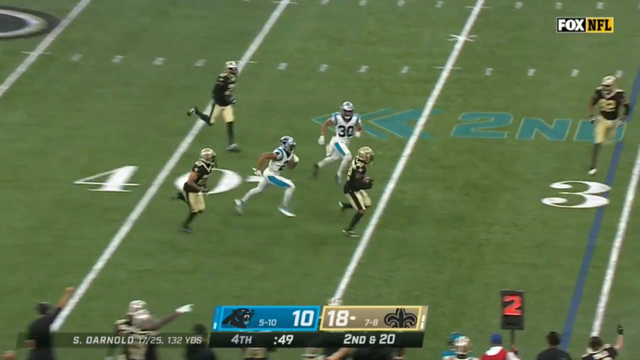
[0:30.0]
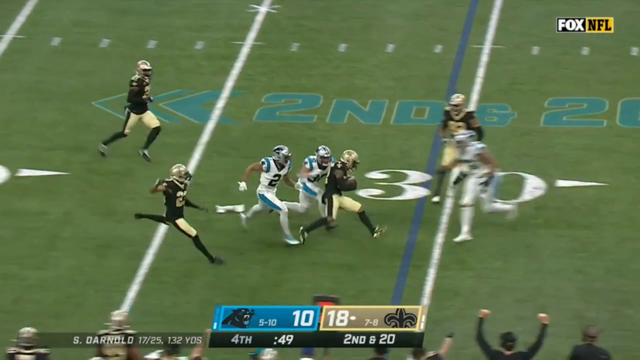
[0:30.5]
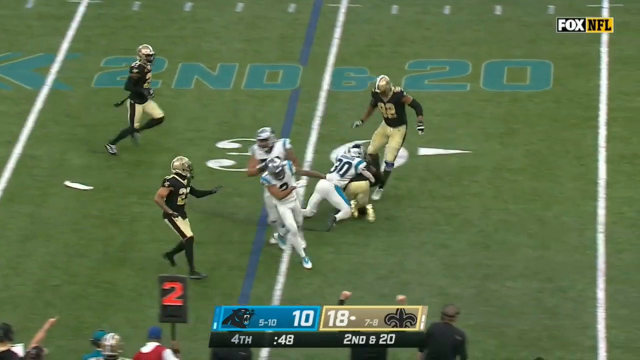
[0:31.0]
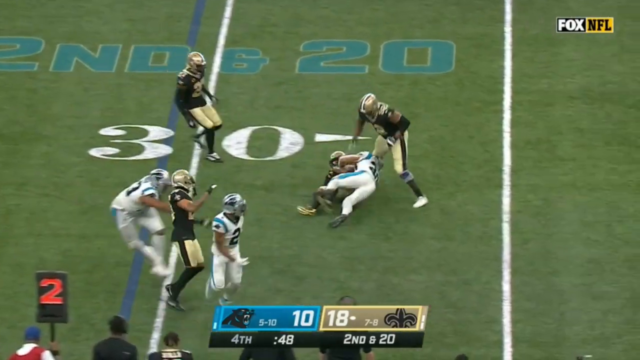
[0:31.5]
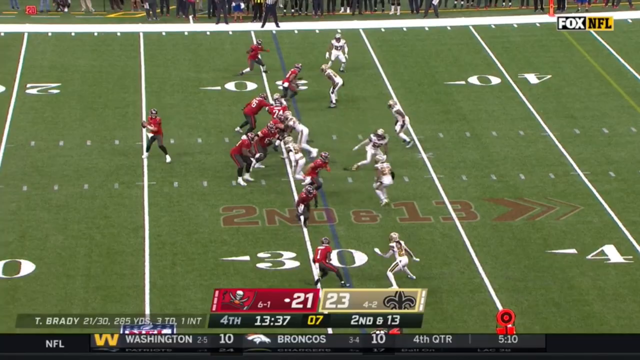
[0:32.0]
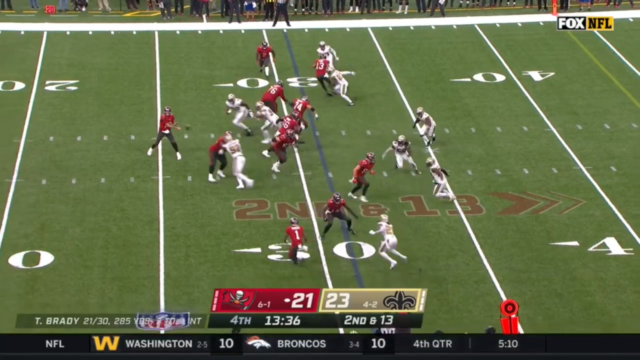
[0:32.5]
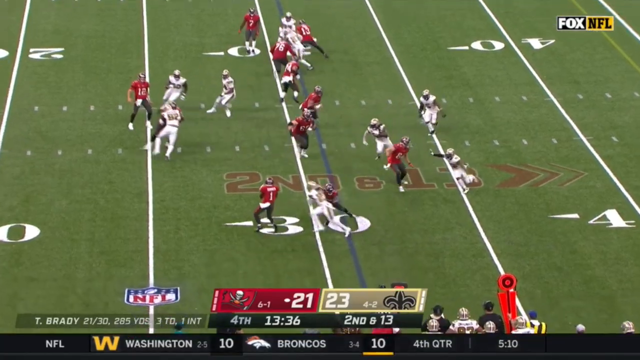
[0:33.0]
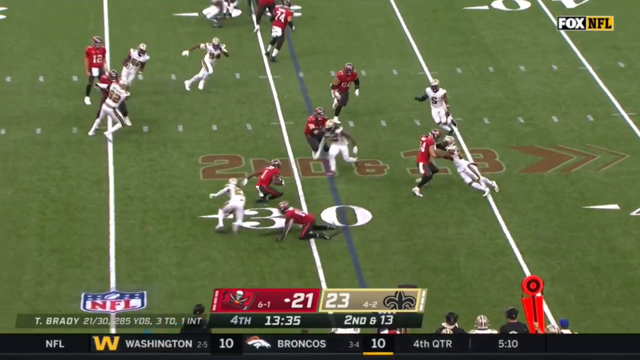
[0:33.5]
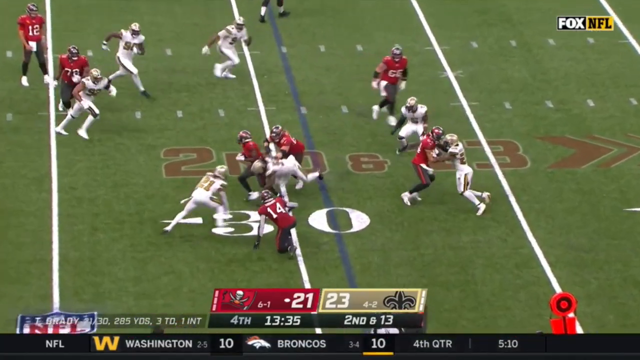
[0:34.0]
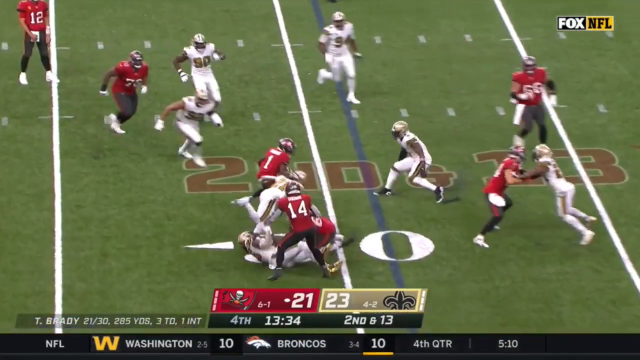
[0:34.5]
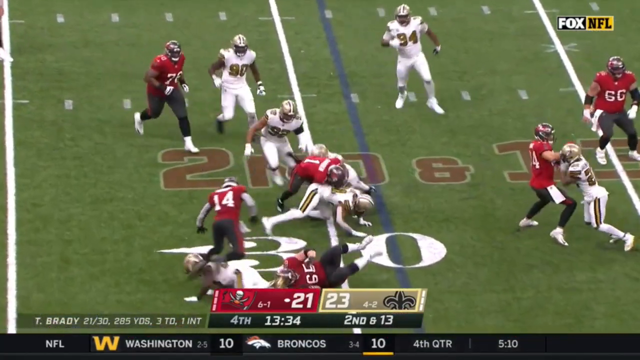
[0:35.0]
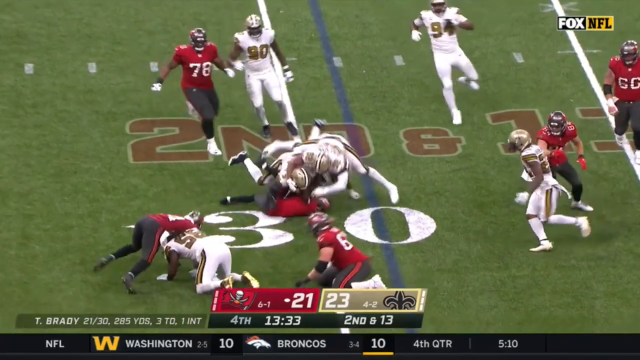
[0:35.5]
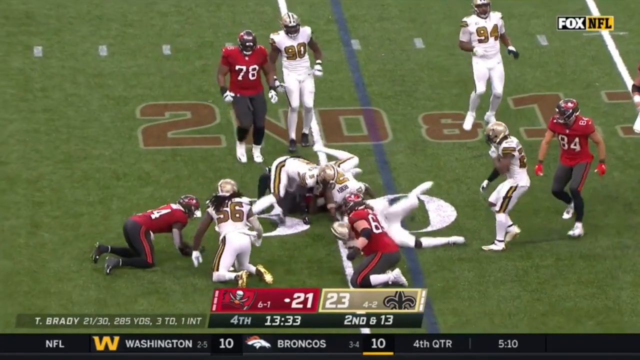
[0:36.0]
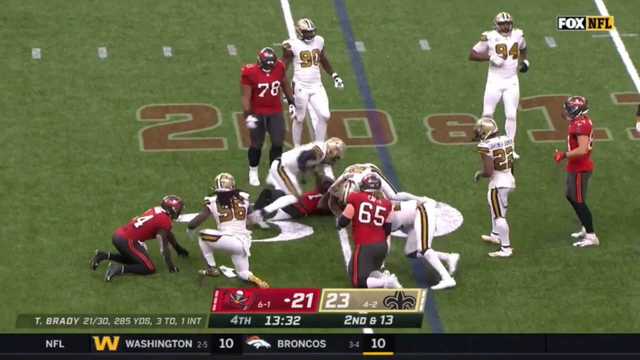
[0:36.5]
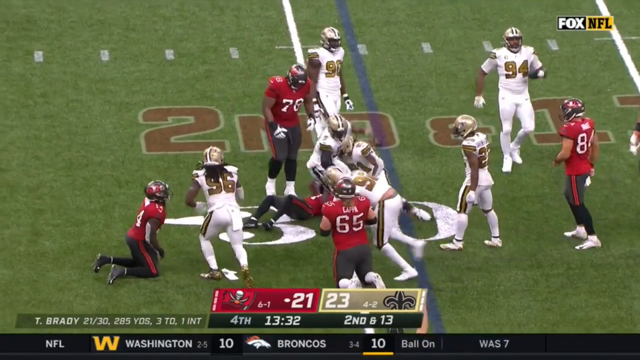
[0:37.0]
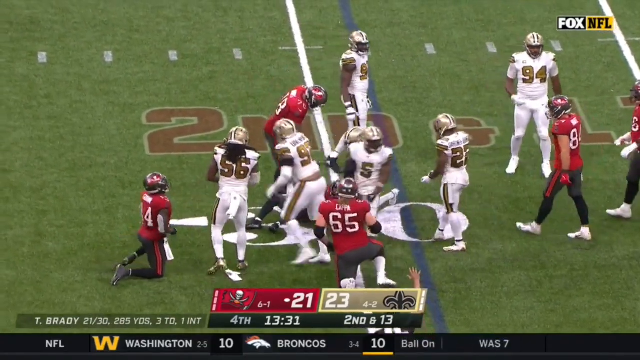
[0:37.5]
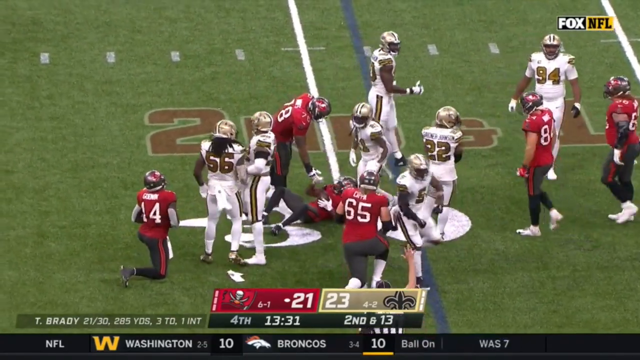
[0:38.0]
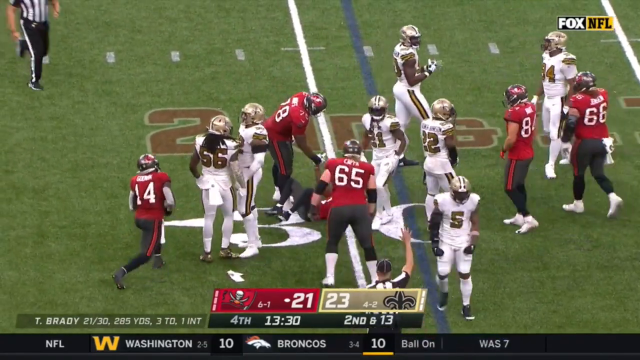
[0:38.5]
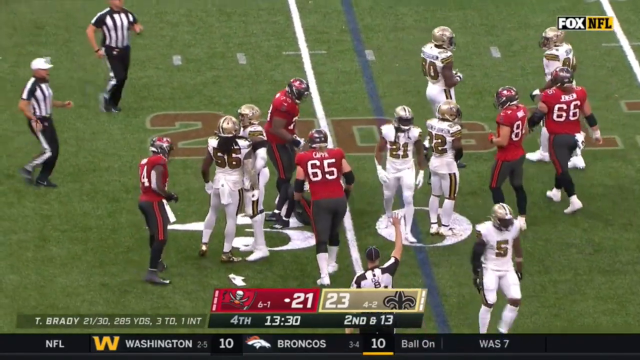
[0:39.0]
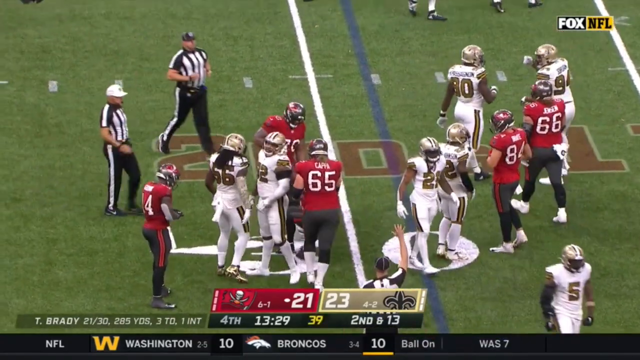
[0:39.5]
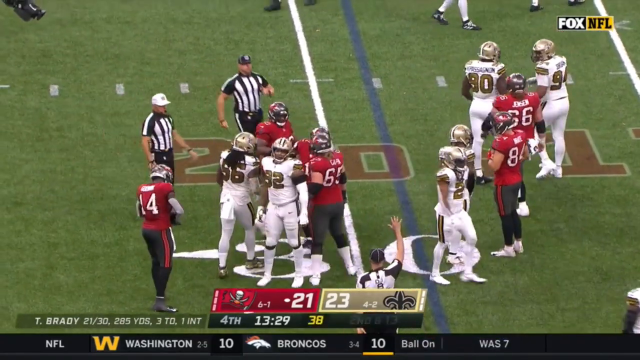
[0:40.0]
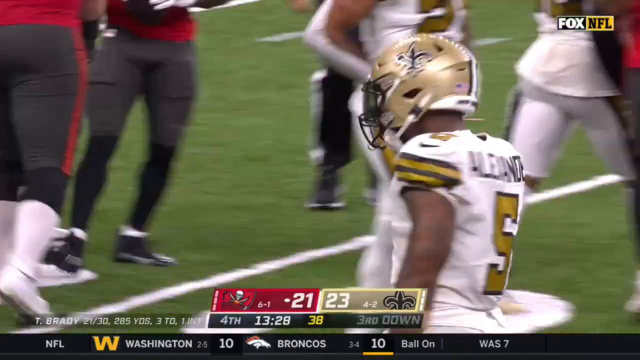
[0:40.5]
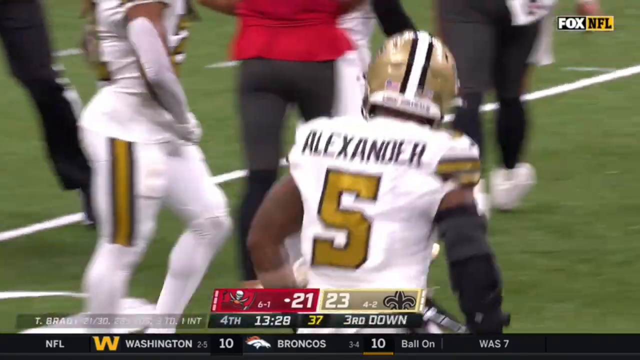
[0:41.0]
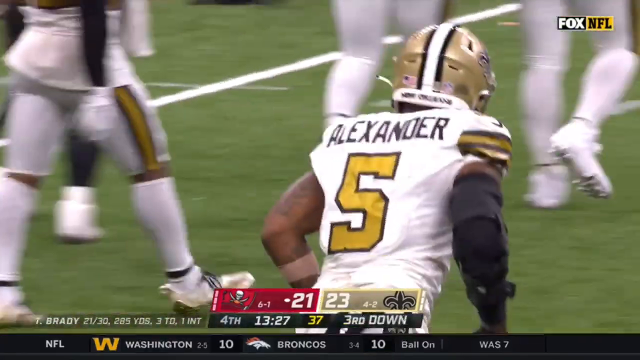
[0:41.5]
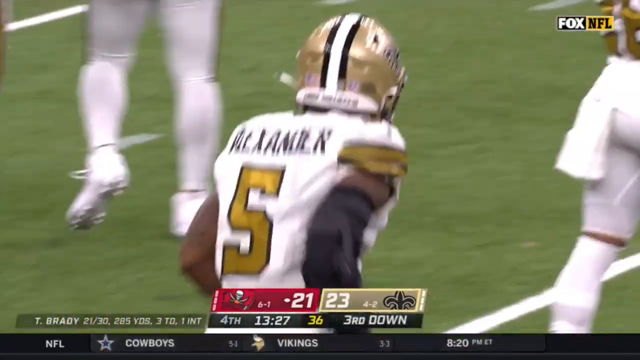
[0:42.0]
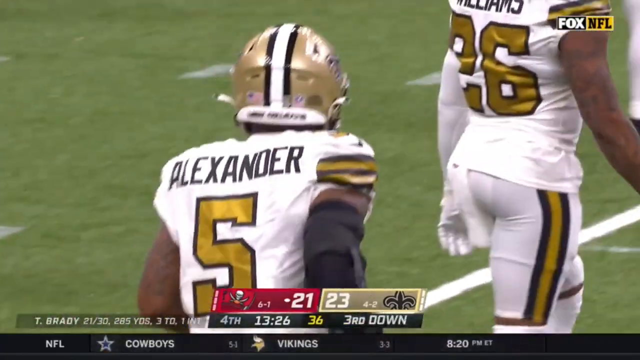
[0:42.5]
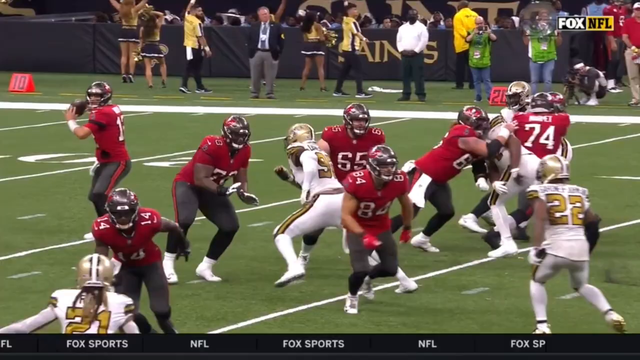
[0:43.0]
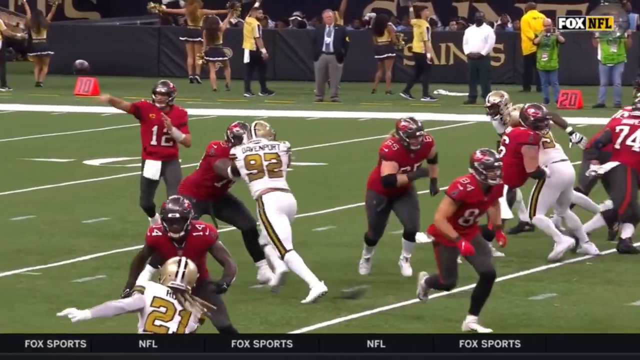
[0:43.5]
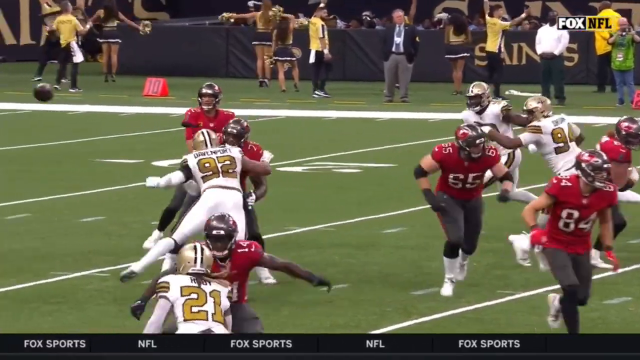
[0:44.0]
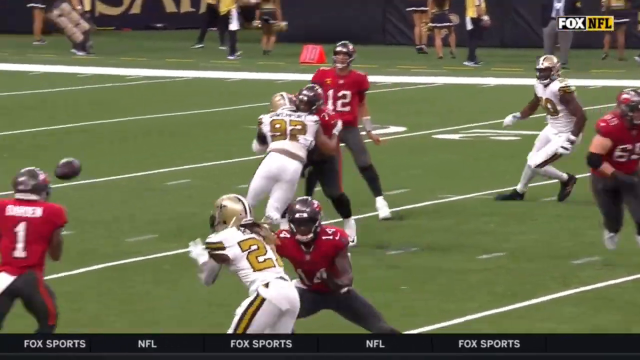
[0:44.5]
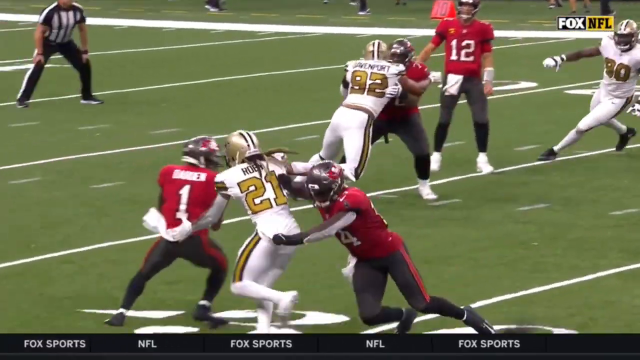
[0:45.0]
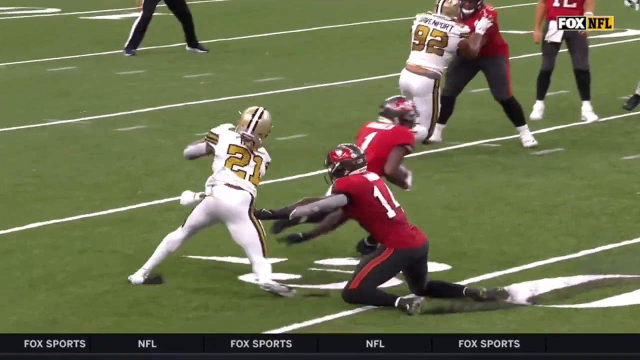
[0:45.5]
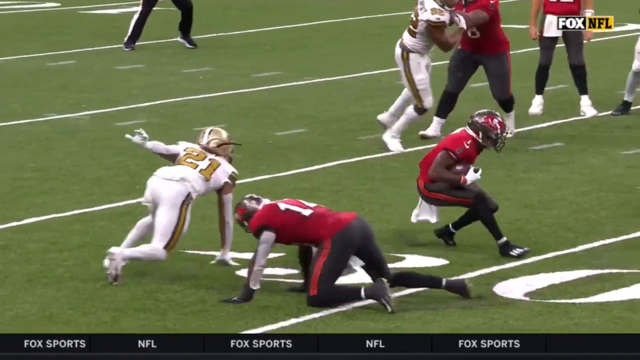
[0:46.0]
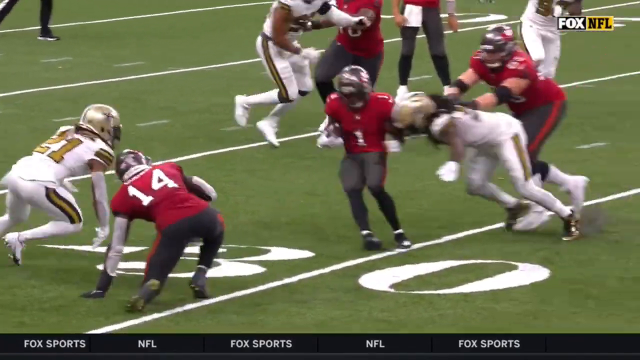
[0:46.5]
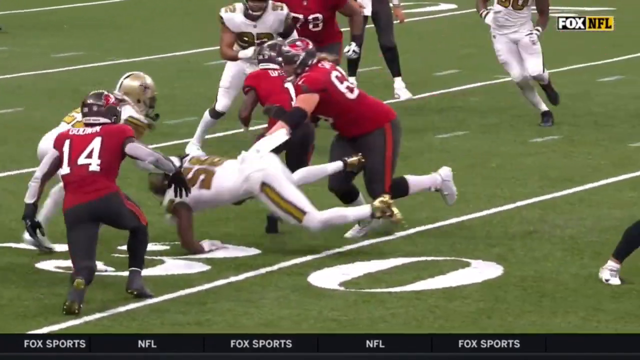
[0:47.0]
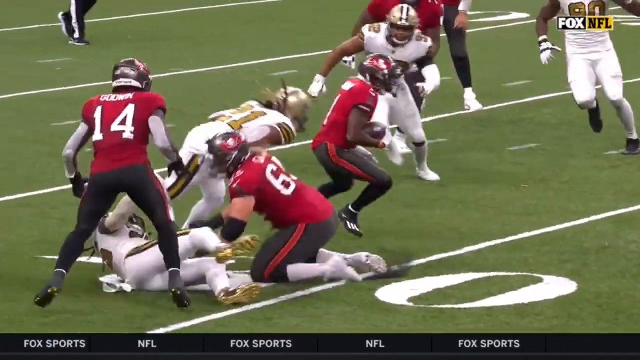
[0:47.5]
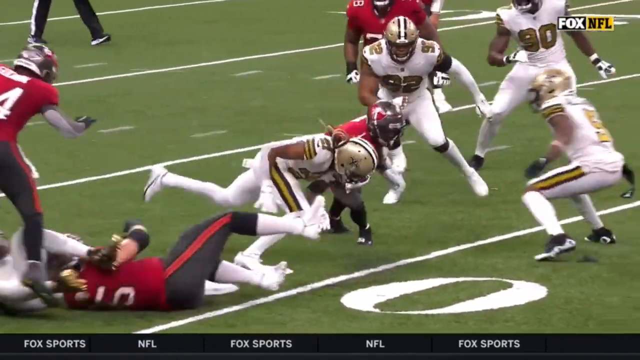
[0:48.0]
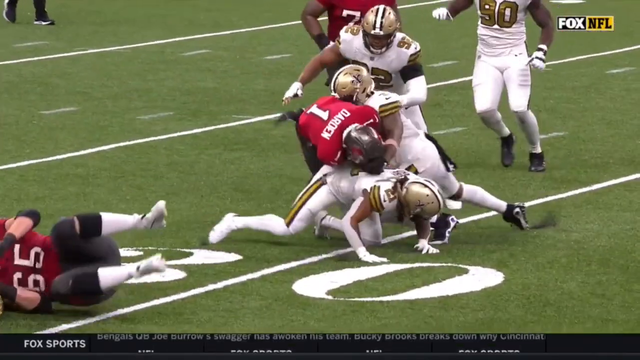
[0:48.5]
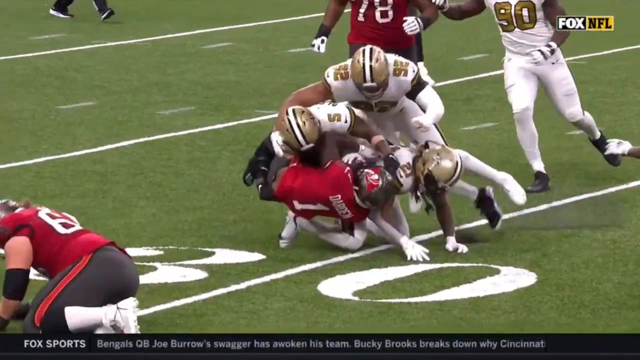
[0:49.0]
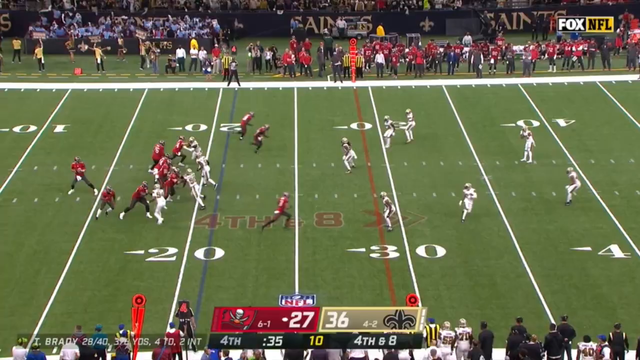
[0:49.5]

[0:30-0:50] After the interception, the offensive team tackles the defensive team. In a Buccaneers versus Saints game, Tom Brady throws to number one, Chris Goodwin, who is brought to the ground by three Saints players. It is third down, with the Saints up two, 23-21. Brady throws a lateral to the right to Goodwin for a couple of yards.